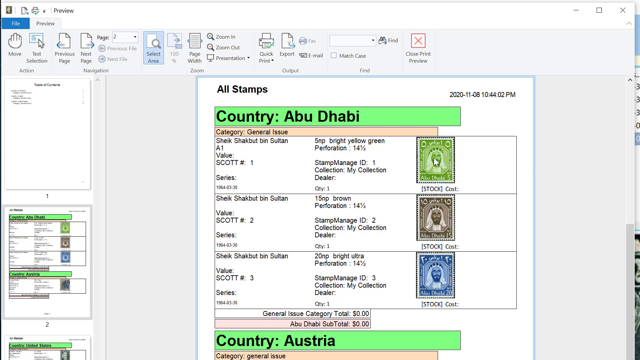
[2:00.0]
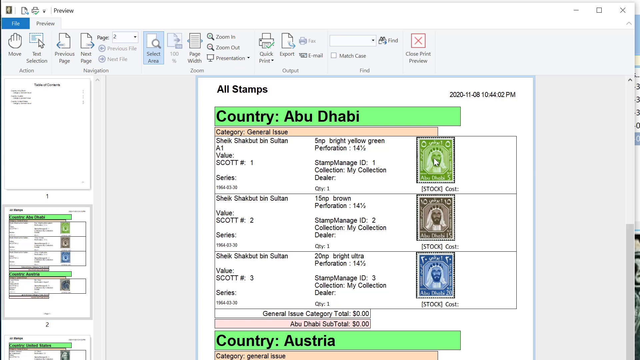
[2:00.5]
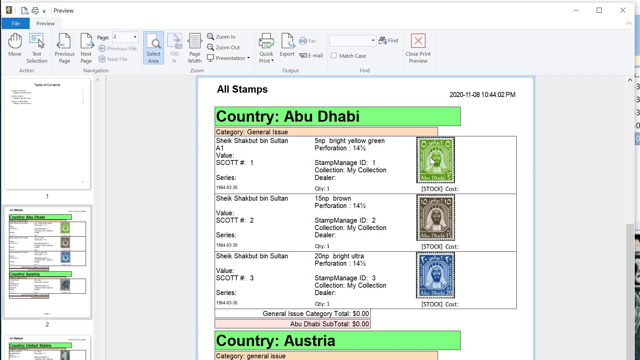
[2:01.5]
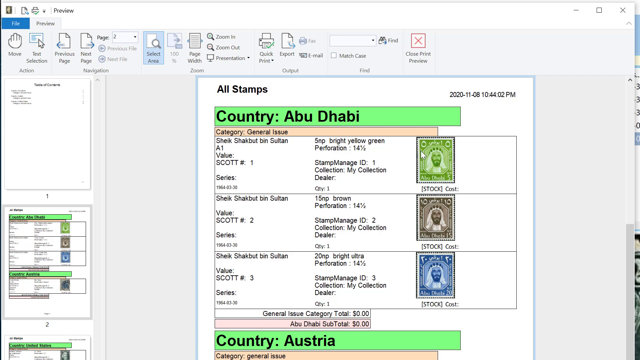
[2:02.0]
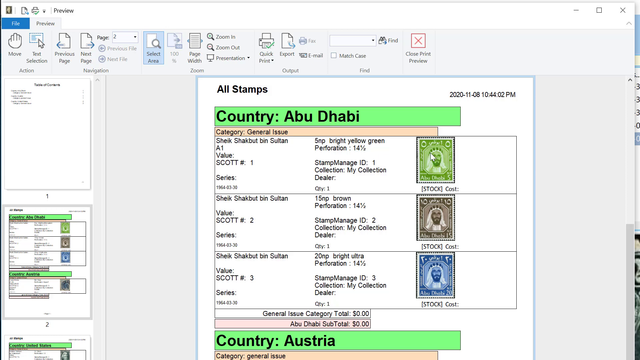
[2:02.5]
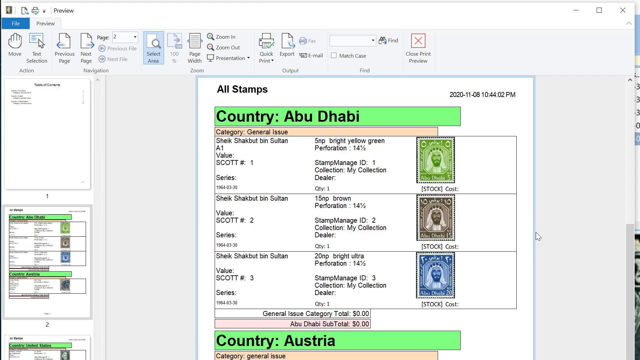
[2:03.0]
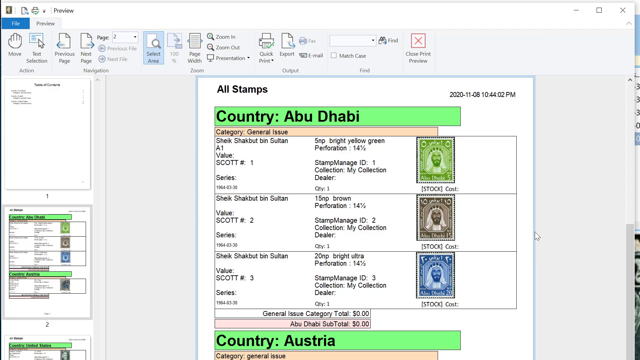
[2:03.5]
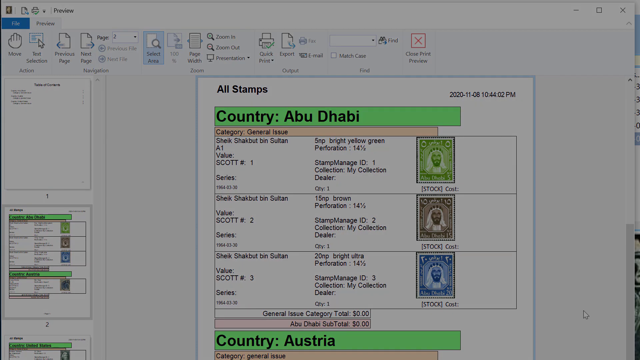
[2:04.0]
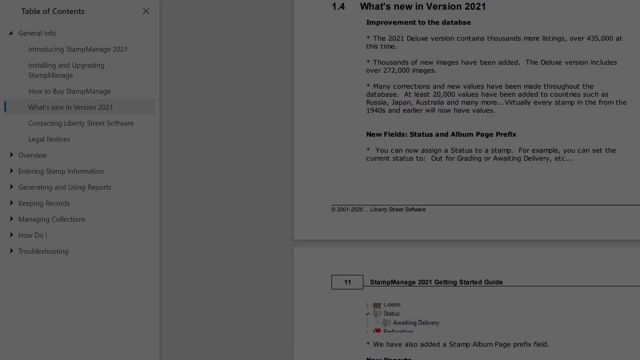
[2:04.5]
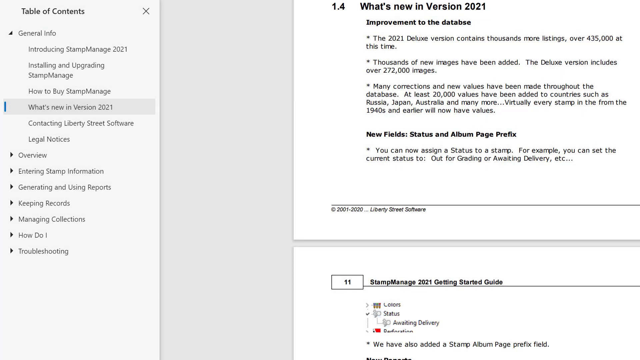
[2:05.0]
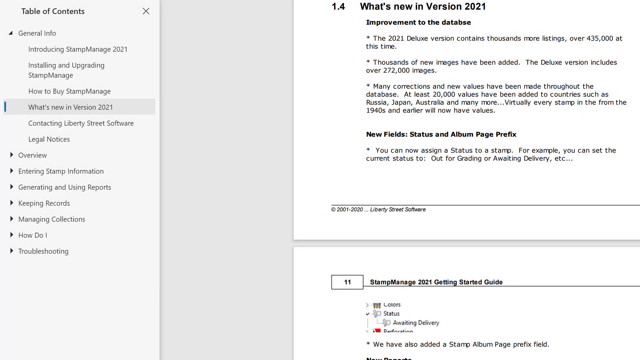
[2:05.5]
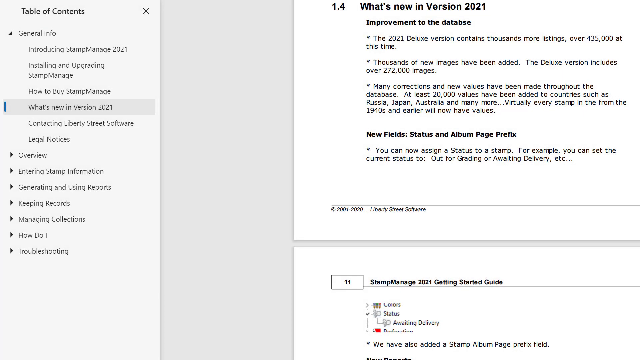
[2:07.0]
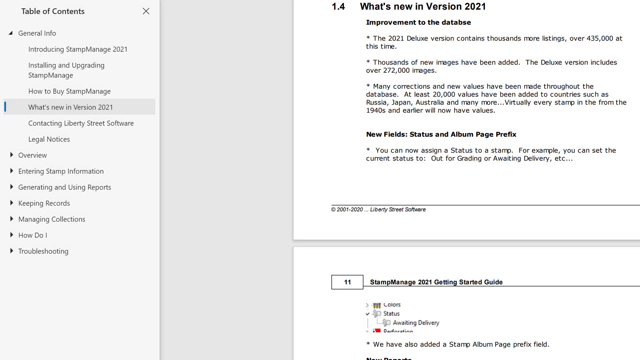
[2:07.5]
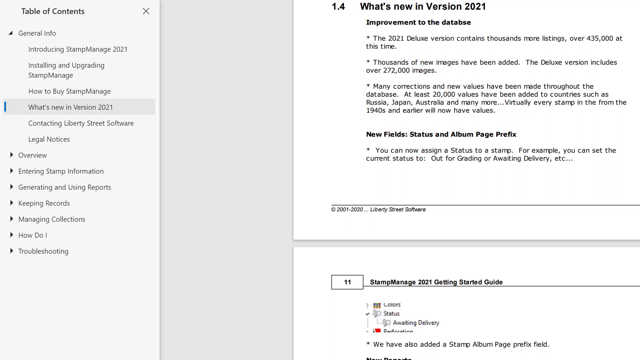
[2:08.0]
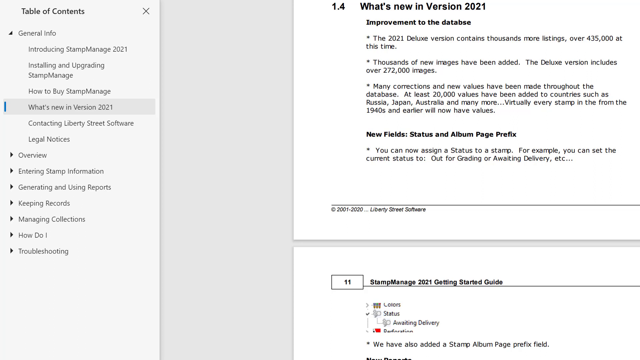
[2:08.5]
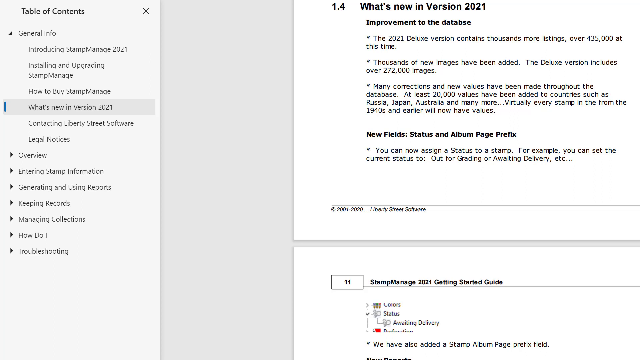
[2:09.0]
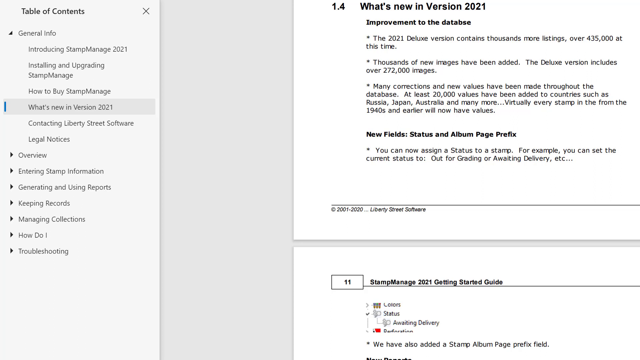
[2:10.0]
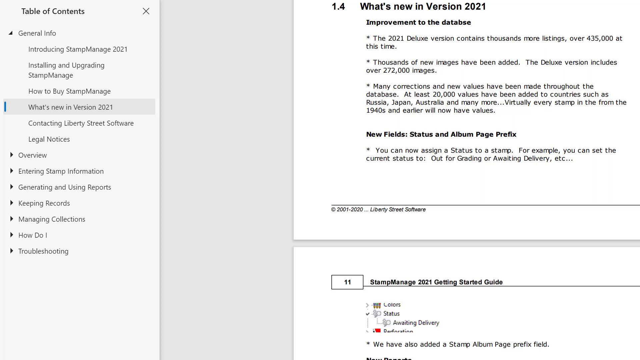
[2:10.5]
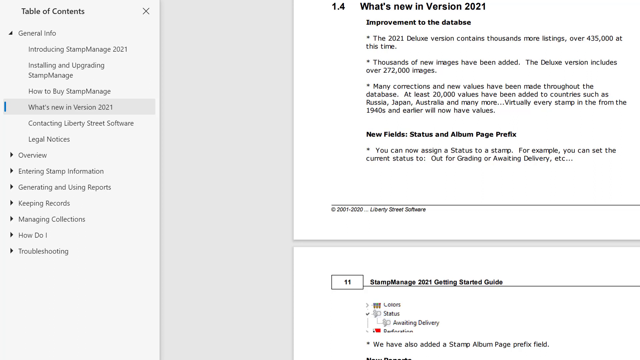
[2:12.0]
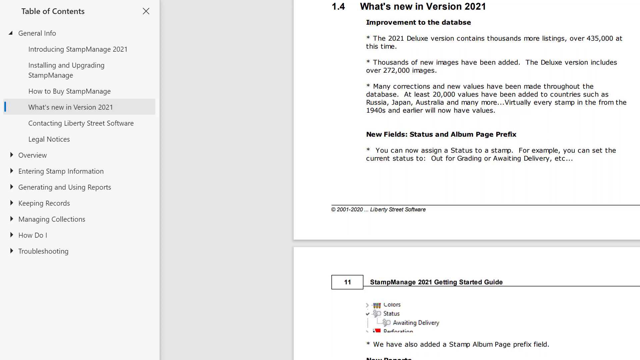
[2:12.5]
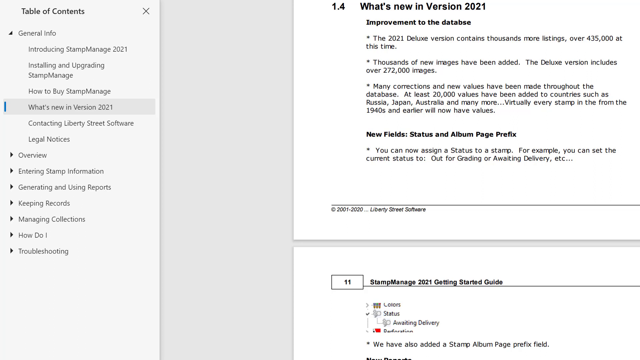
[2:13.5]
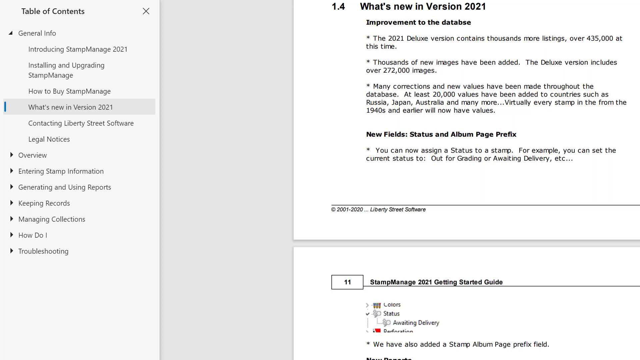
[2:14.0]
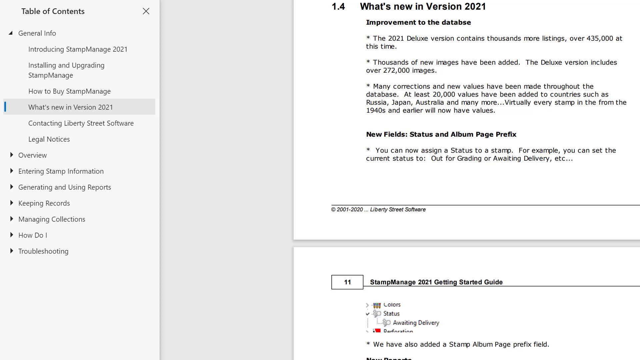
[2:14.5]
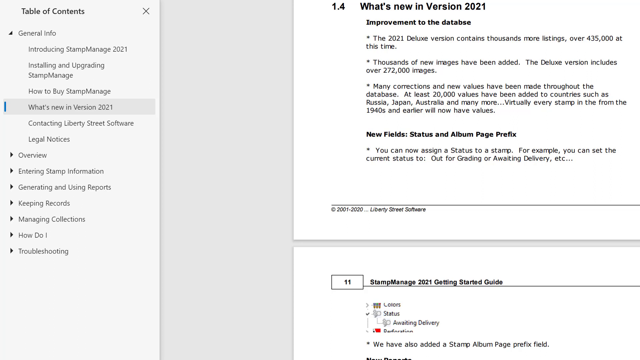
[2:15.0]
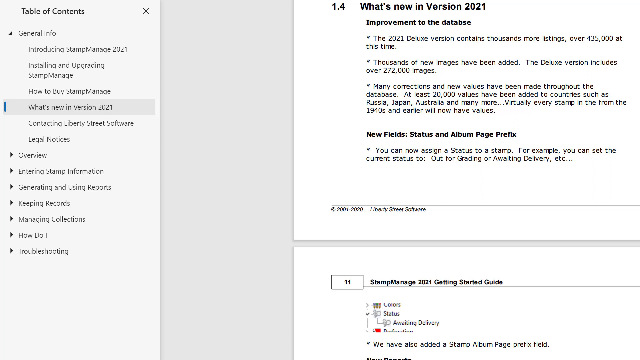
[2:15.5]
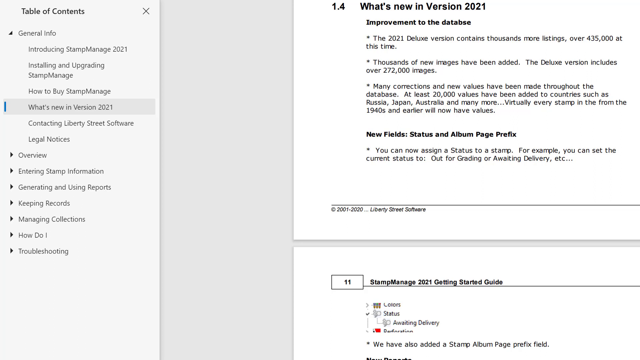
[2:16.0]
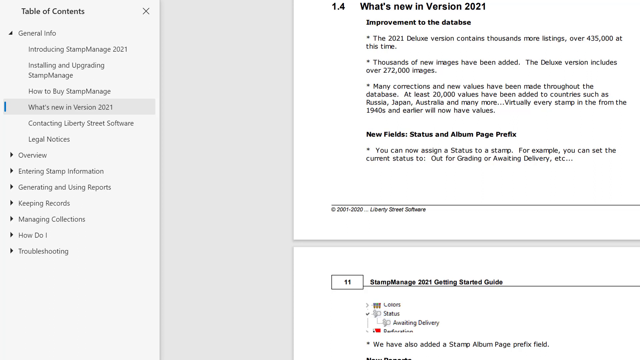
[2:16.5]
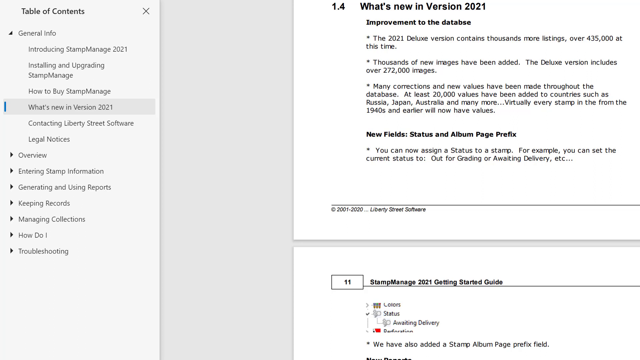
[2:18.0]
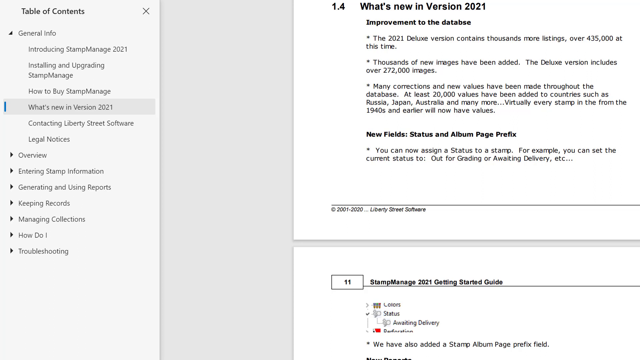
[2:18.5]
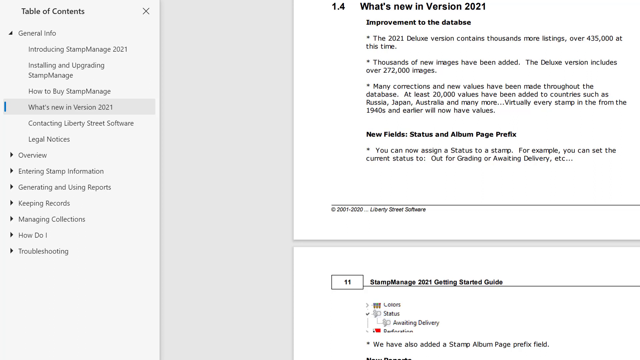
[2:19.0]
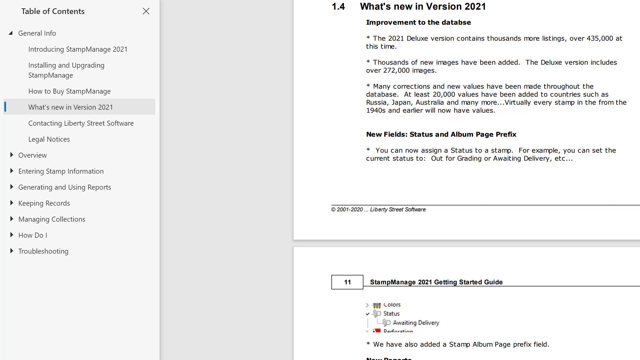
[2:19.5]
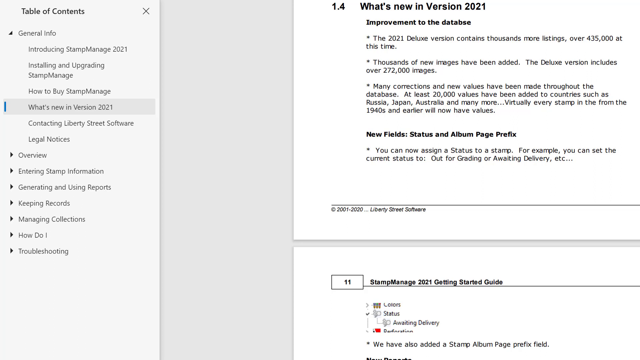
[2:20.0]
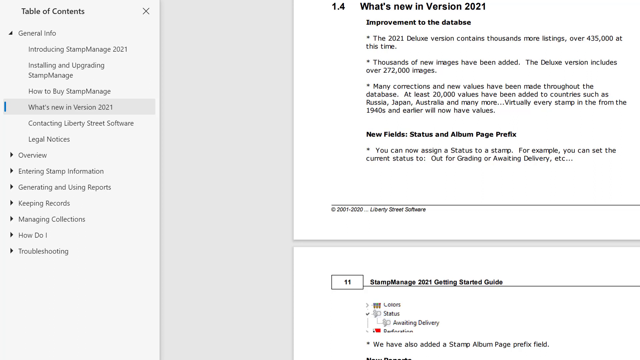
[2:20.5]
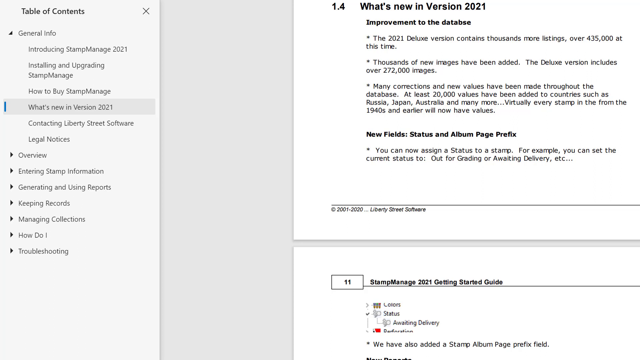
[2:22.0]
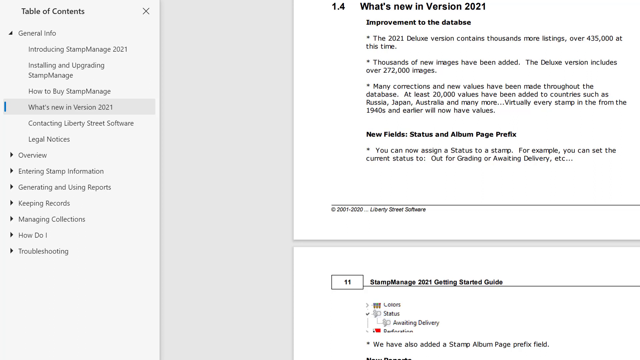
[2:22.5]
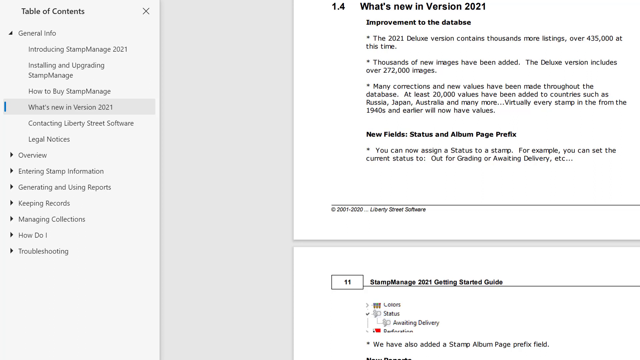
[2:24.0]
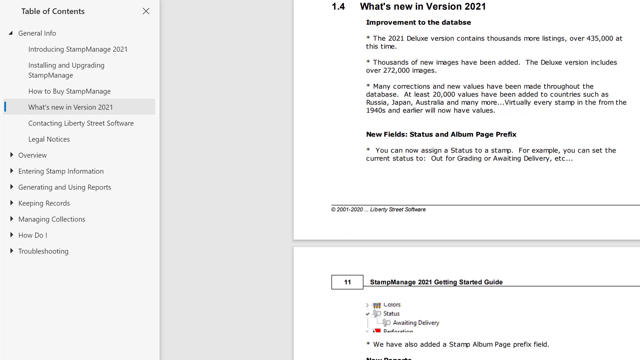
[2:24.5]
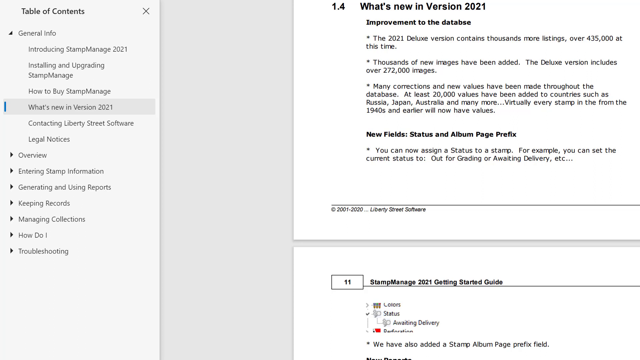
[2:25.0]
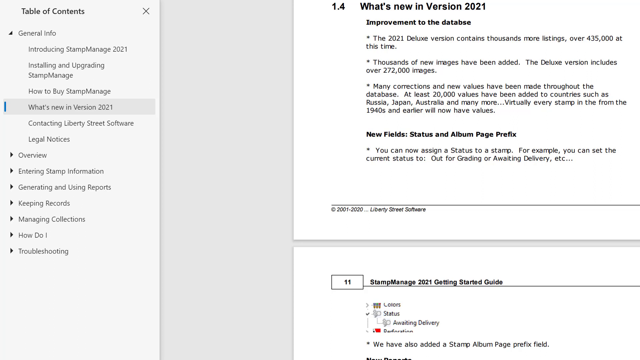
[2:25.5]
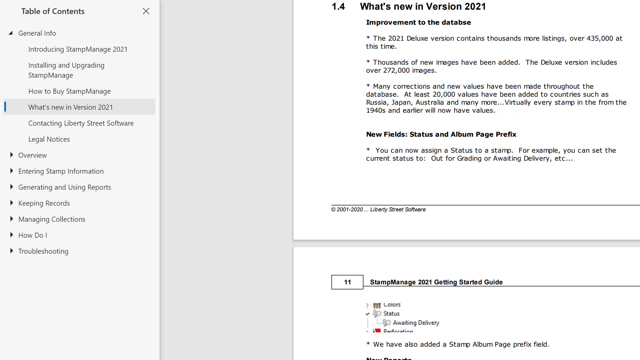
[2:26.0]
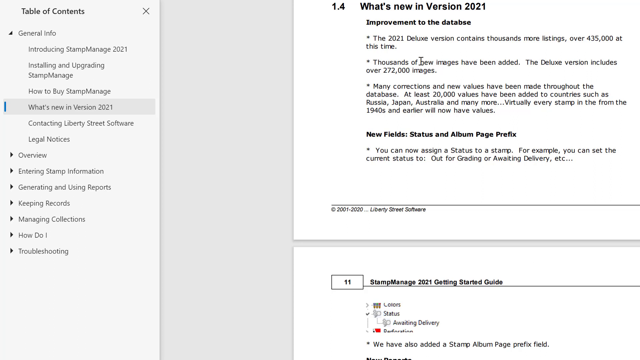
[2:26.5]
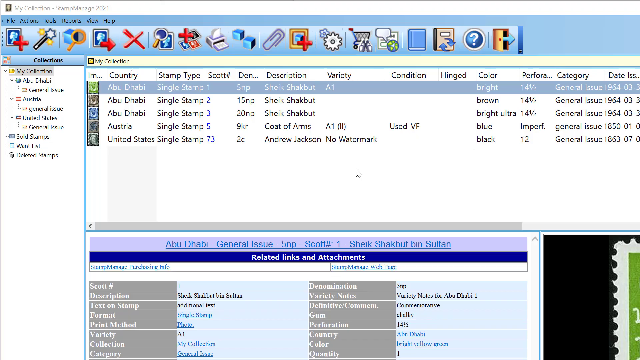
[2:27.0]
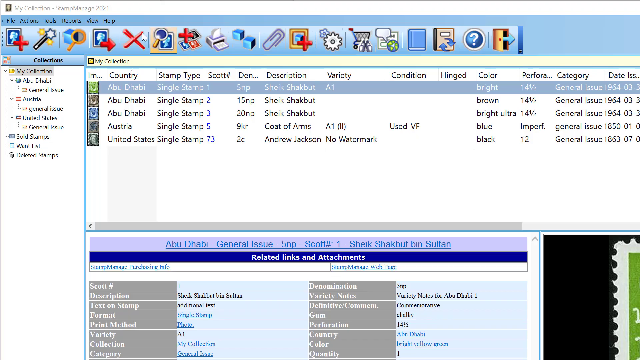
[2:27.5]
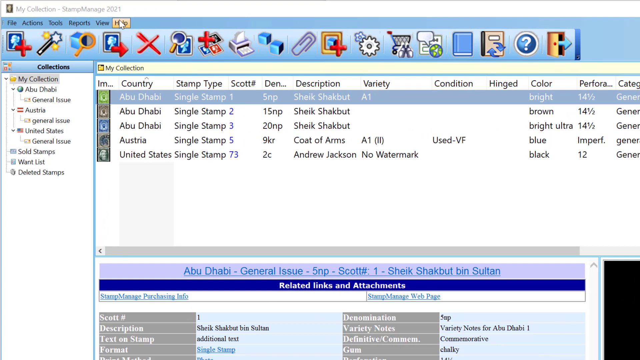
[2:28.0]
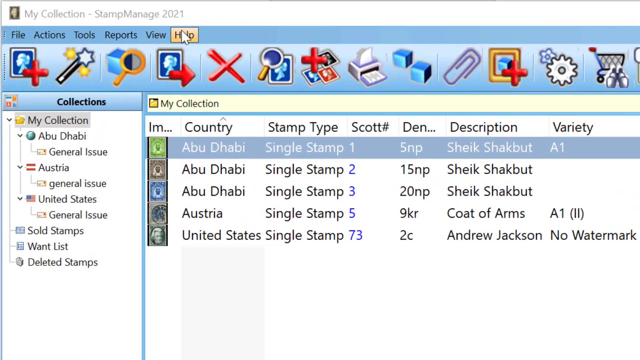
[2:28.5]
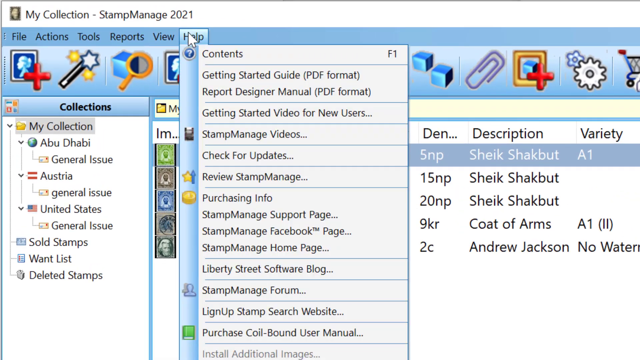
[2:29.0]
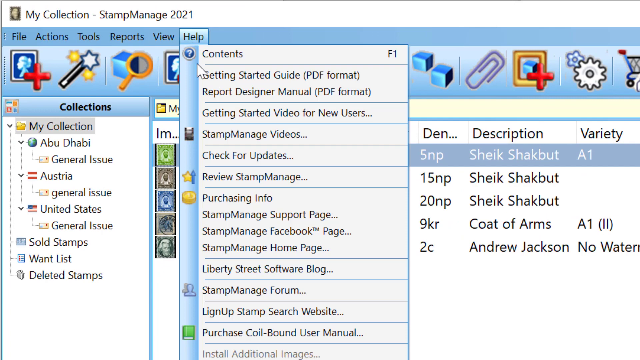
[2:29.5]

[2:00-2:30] The print preview page of the stamp collection is open, then fades out of view, and a new web page or application opens. A column on the left reads, from the top, "Table of Contents", then "General Info", with subheadings "Introducing Stamp Manage 2021", "Installing and Upgrading Stamp Manage", "How to Buy Stamp Manage" and "What's New in Version 2021", which is selected. On the right is what looks like a classic PDF or printable page with information on the new version of the application, describing improvements to the database, new fields and various other text about the program. There is little movement; the cursor moves around just a little. The left column continues with the subheadings "Contacting Liberty Street Software" and "Legal Notices", followed by the main headings "Overview", "Entering Stamp Information", "Generating and Using Reports", "Keeping Records", "Managing Collections", "How Do I" and "Troubleshooting".